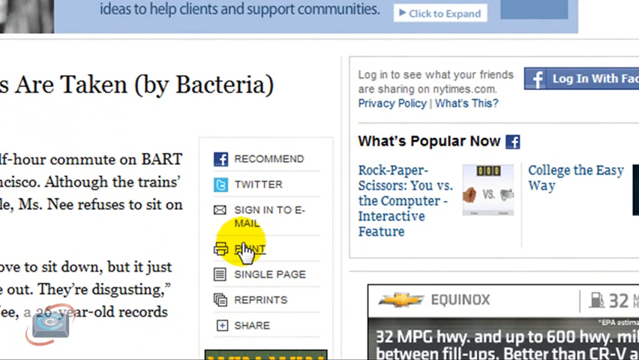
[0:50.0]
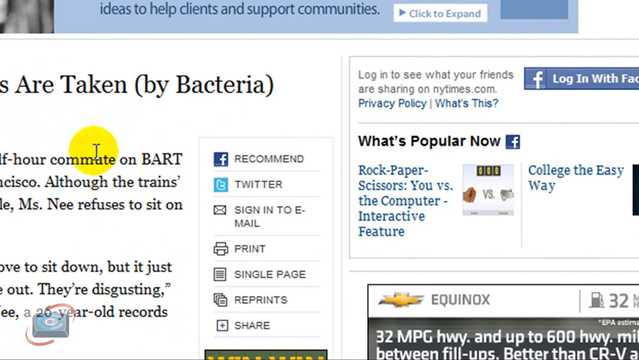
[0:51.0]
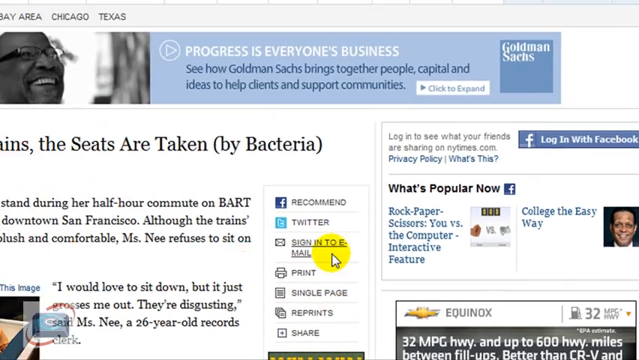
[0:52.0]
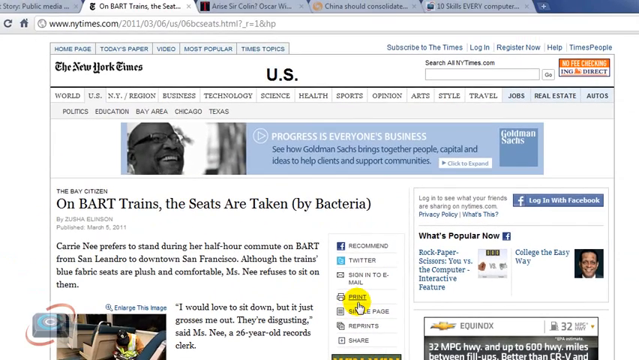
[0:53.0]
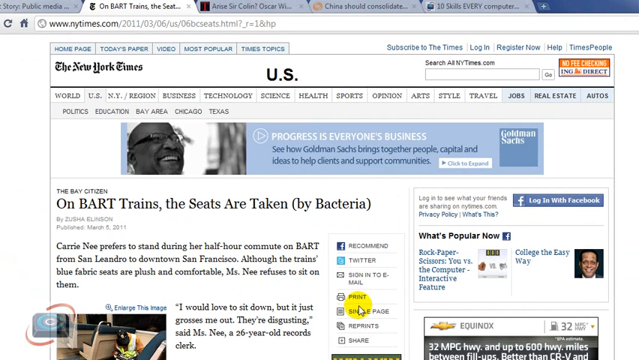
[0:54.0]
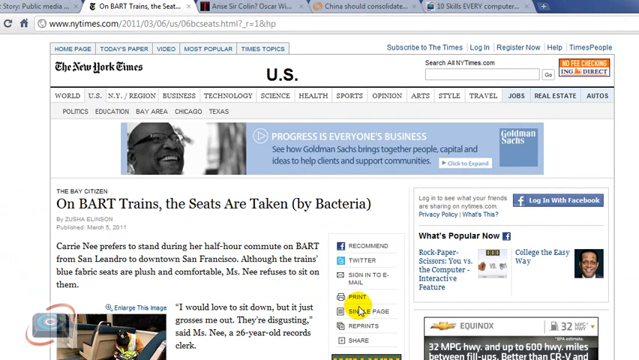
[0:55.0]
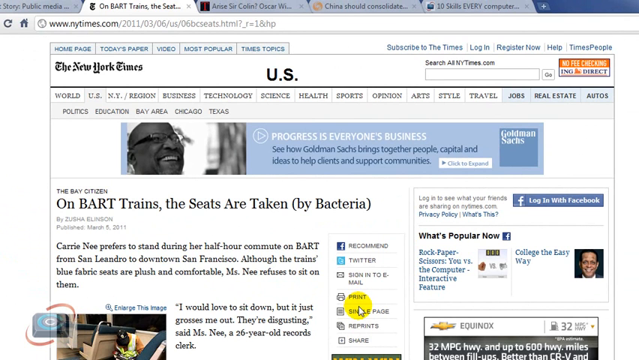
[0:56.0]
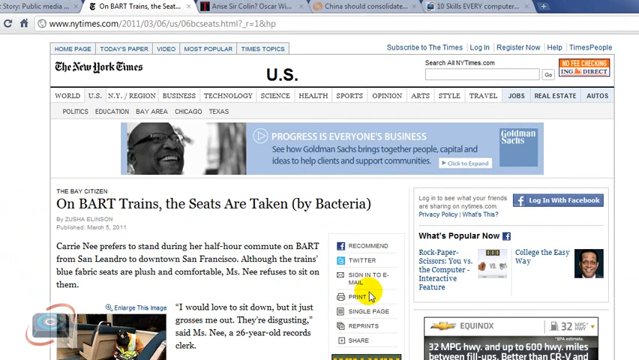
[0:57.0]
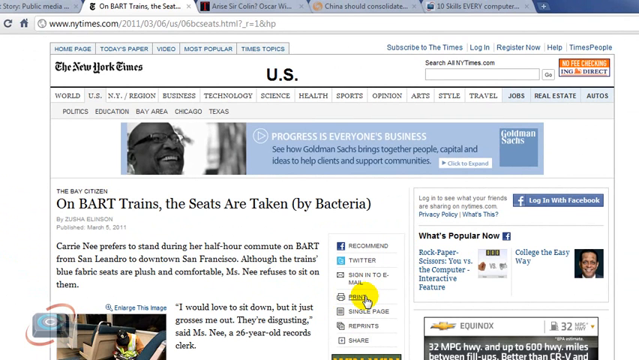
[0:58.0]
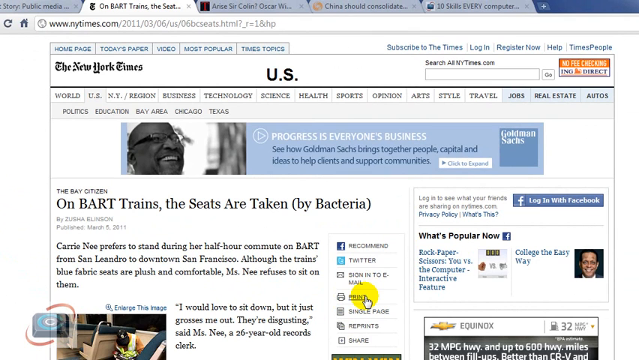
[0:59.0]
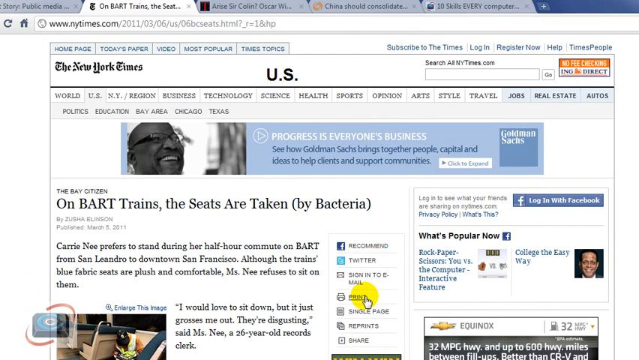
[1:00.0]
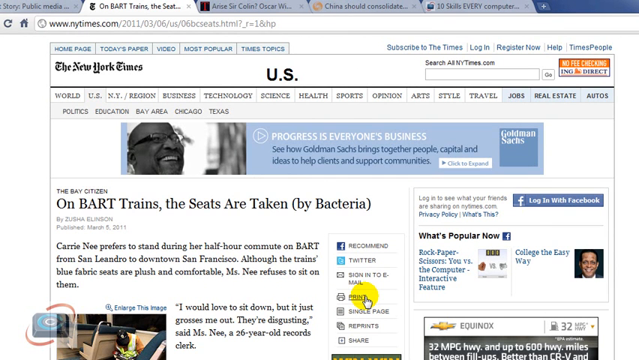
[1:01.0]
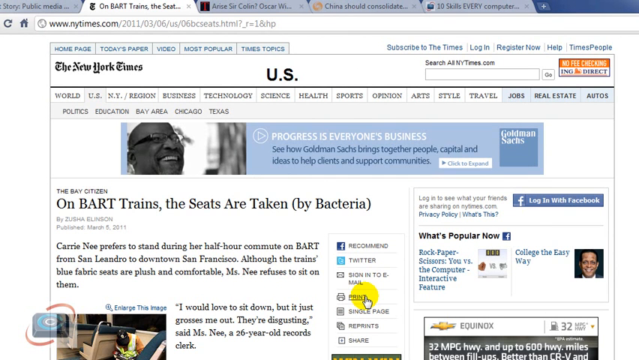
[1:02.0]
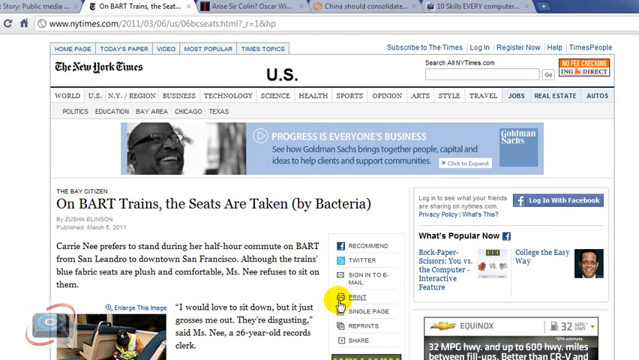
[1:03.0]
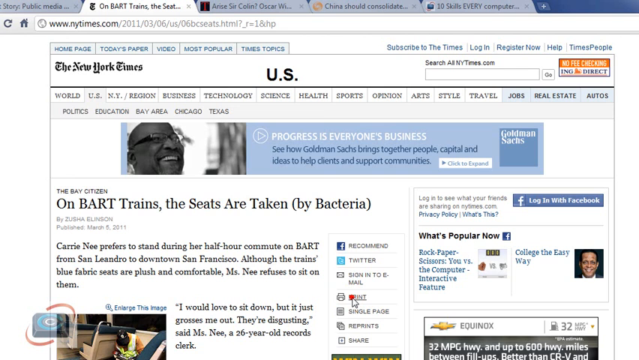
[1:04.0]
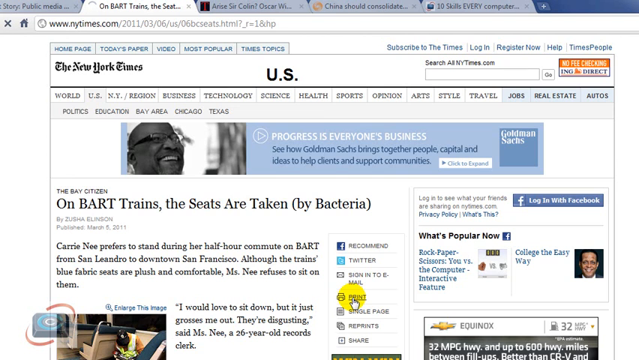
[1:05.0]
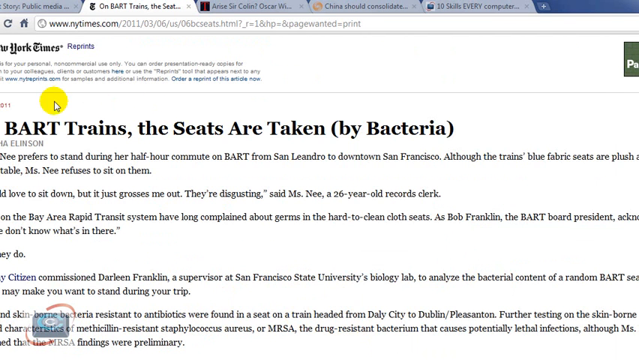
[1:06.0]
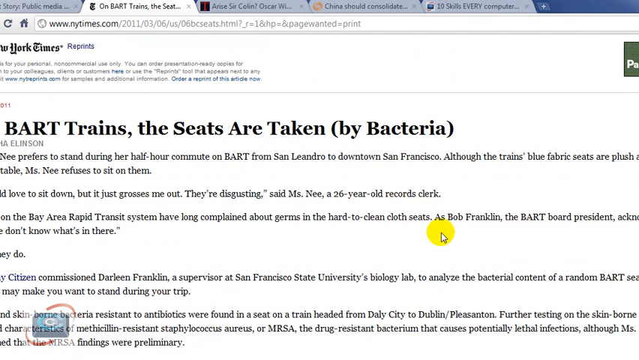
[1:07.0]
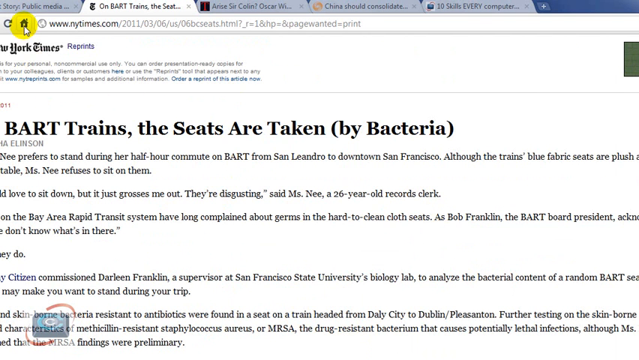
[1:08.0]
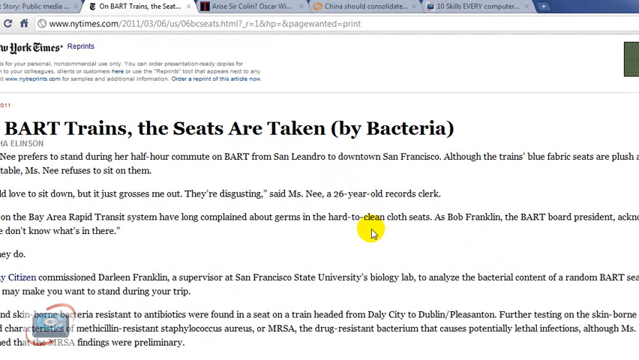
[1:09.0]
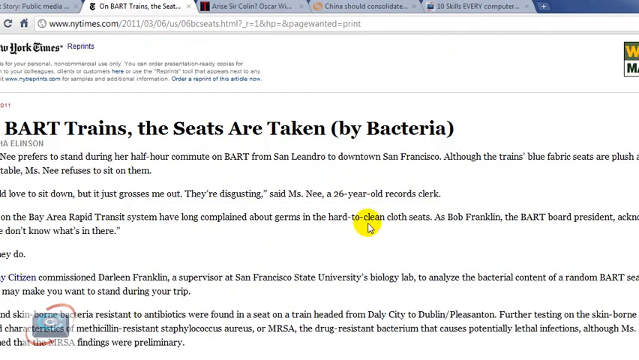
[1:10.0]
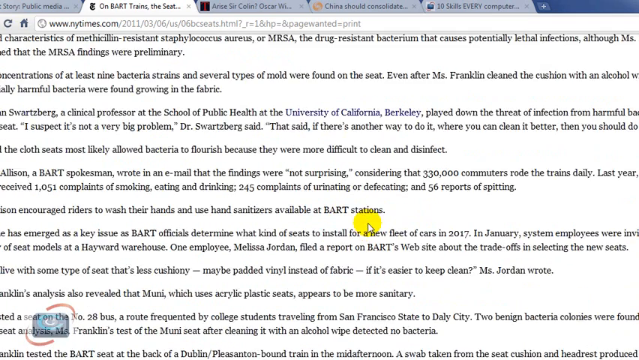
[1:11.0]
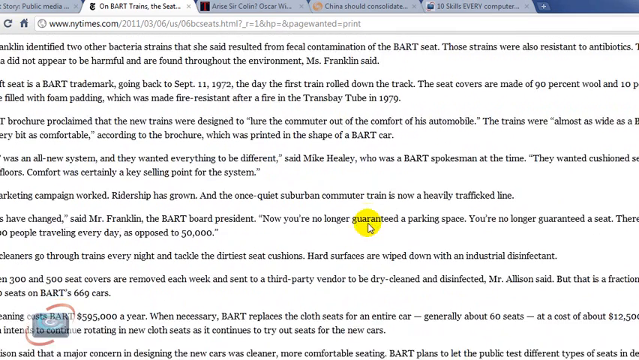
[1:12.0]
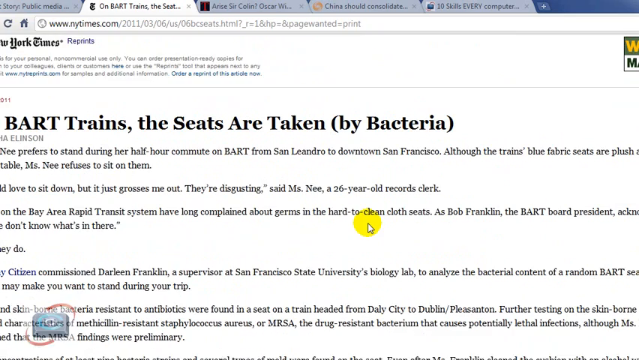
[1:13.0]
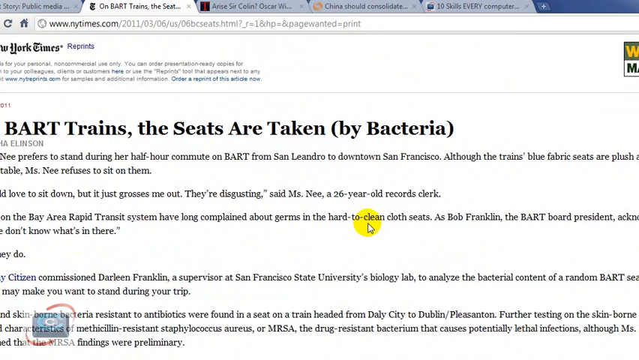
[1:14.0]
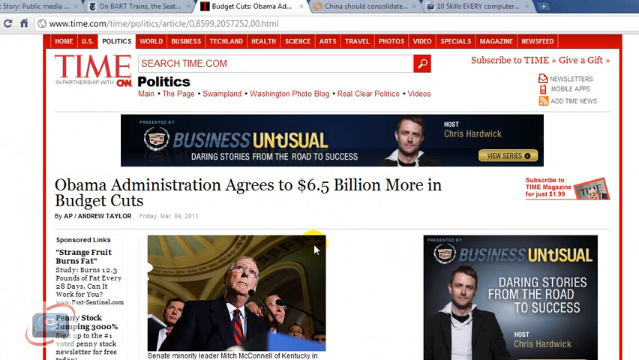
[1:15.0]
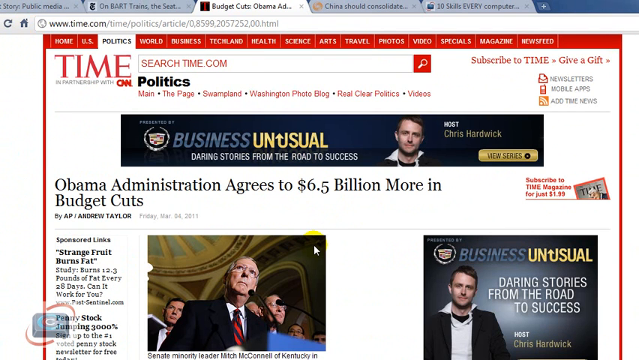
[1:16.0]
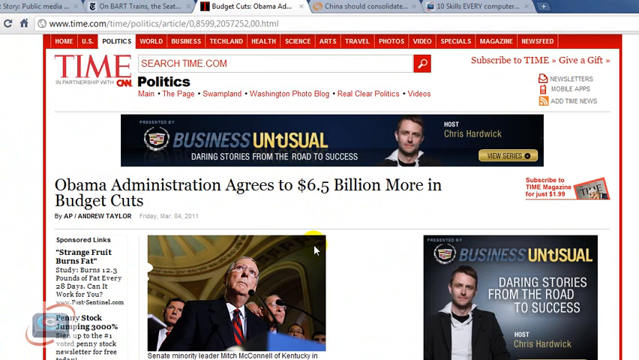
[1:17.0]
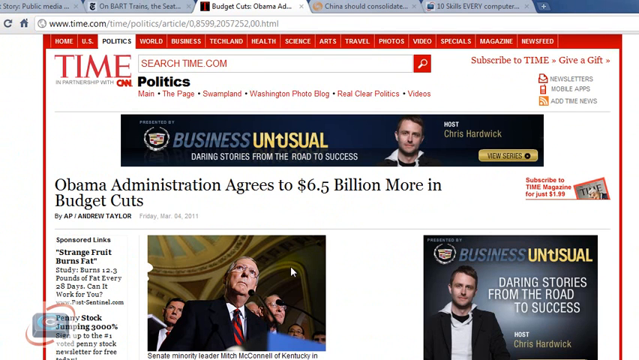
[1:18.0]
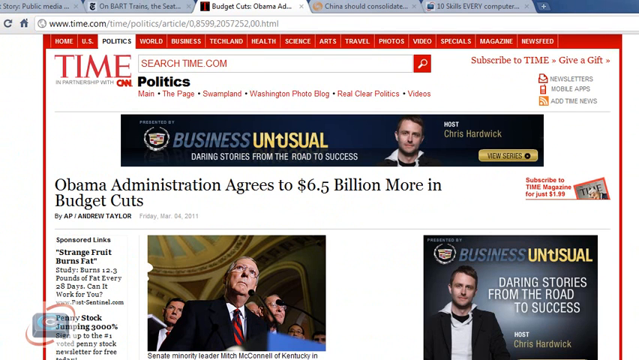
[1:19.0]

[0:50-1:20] A page shows Yahoo and the New York Times, with "US" on it, and an article about BART trains whose seats are taken by bacteria. The page is larger and then becomes smaller. The cursor, circled in yellow, moves around the page into the area with Twitter and print, chooses print, and then moves around the article itself. It goes up to the browser, the page scrolls up, and another page opens from Time on politics. This page is very colorful, with articles in color, and the red stands out. The cursor keeps moving randomly up and down the page, easy to follow because it is yellow. Finally, the cursor stops on the print sign with the big yellow circle around it.